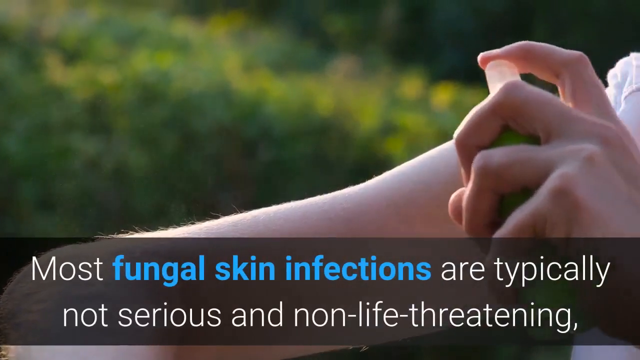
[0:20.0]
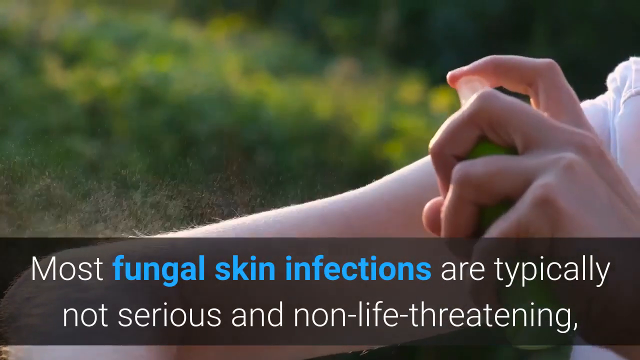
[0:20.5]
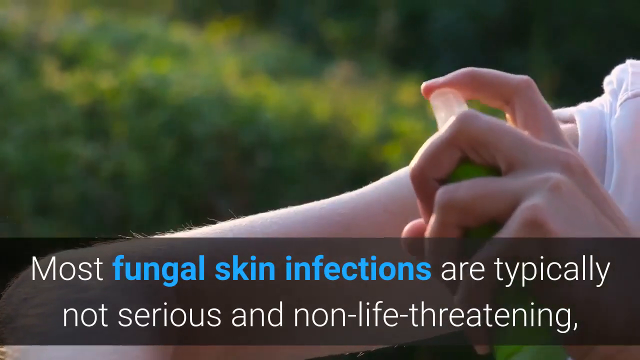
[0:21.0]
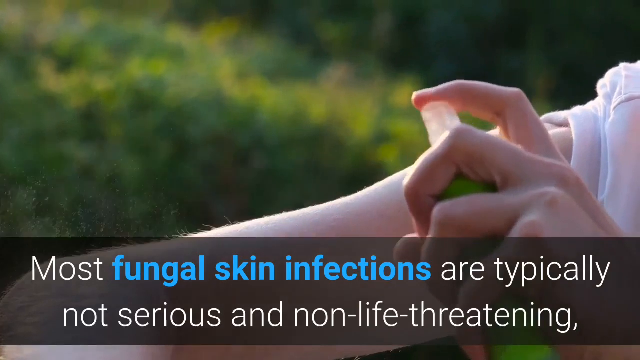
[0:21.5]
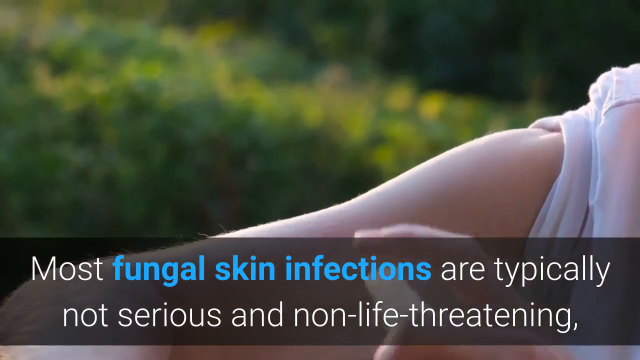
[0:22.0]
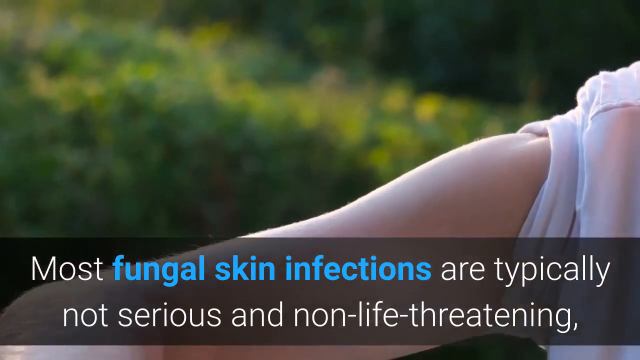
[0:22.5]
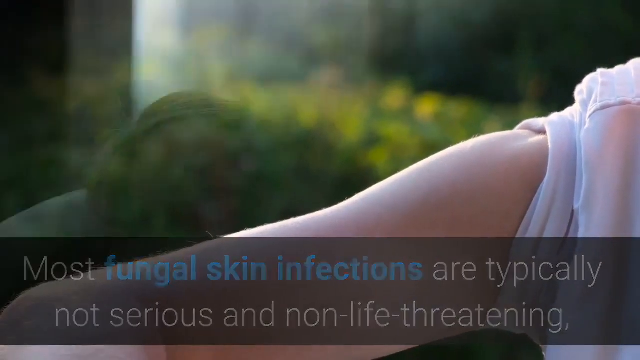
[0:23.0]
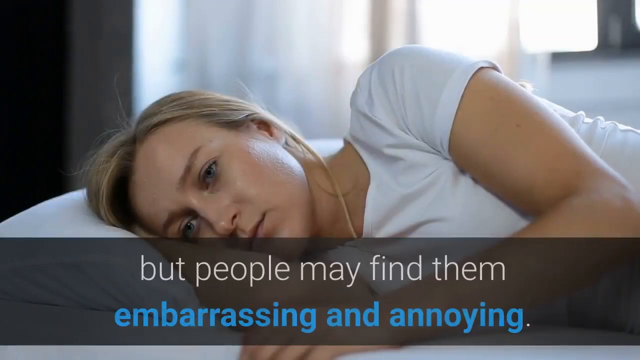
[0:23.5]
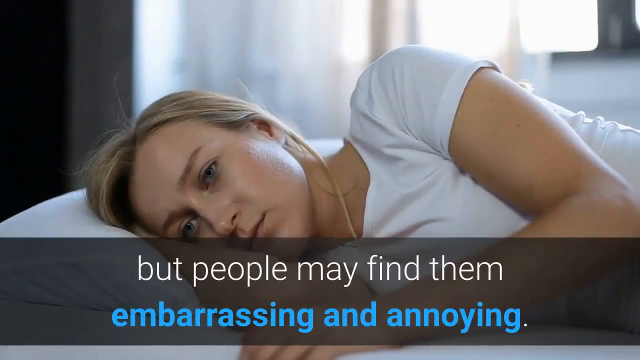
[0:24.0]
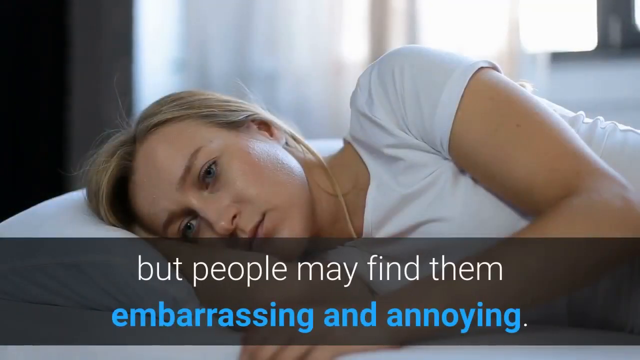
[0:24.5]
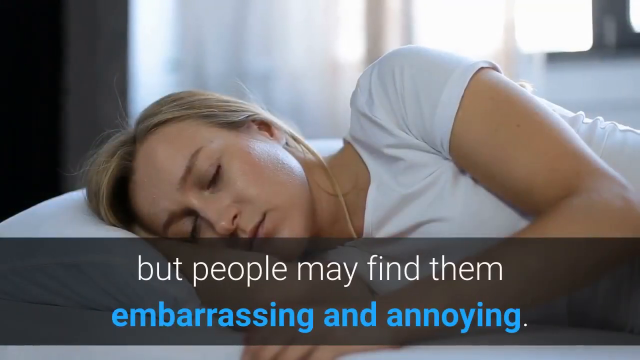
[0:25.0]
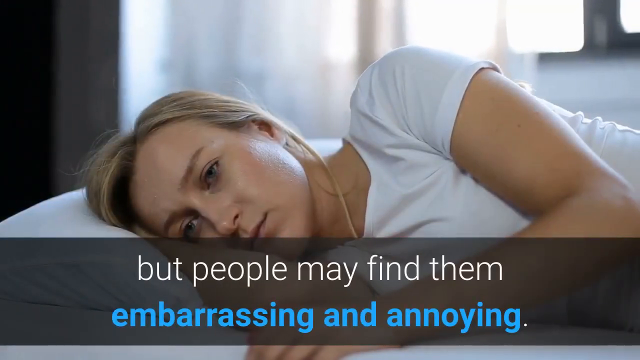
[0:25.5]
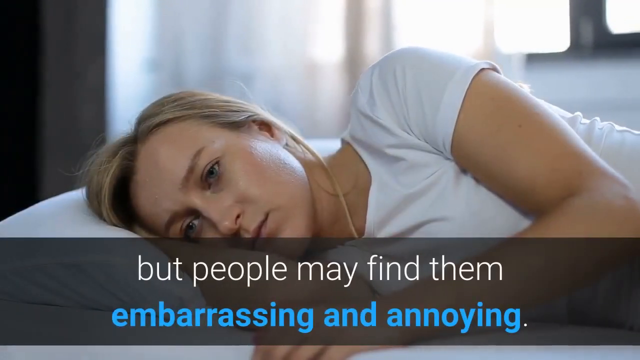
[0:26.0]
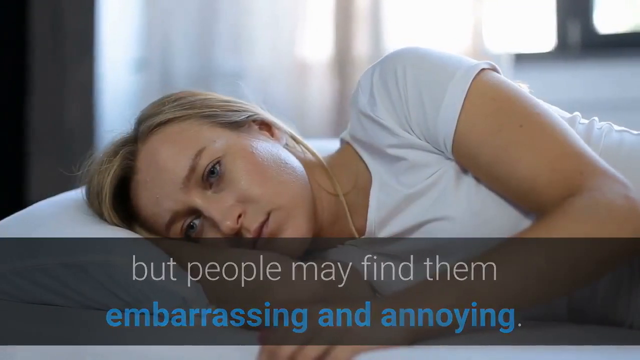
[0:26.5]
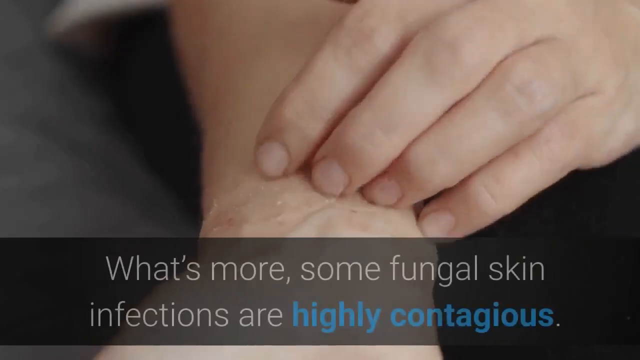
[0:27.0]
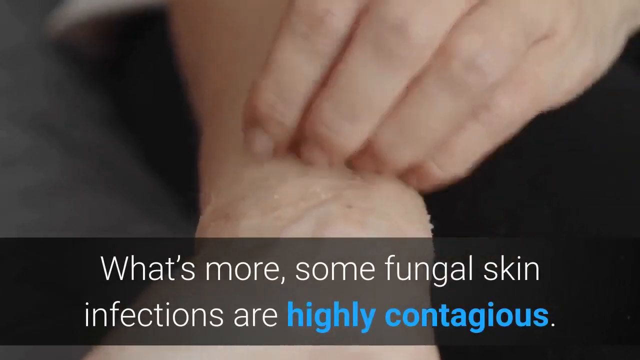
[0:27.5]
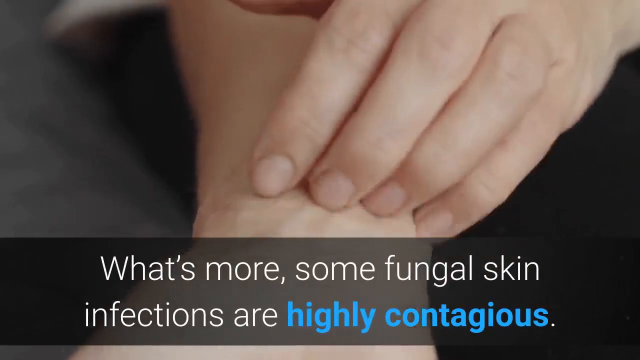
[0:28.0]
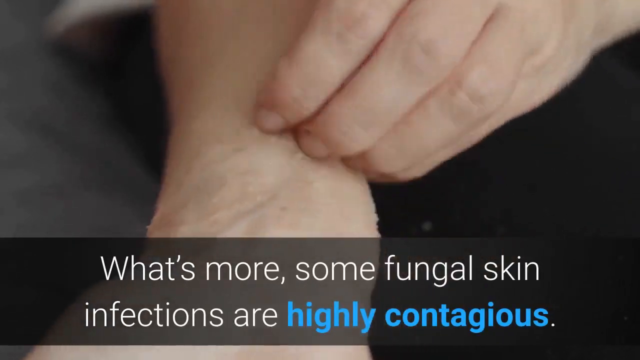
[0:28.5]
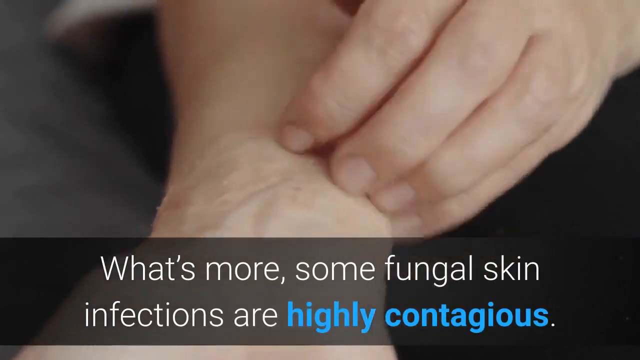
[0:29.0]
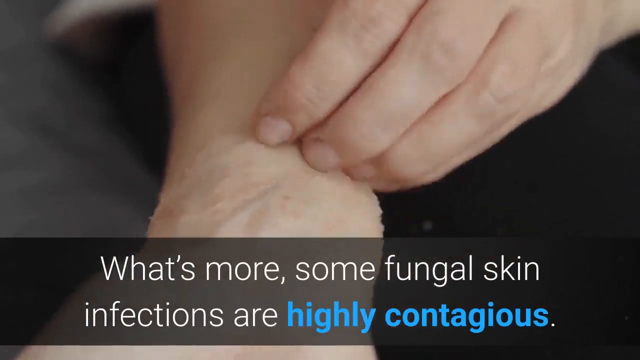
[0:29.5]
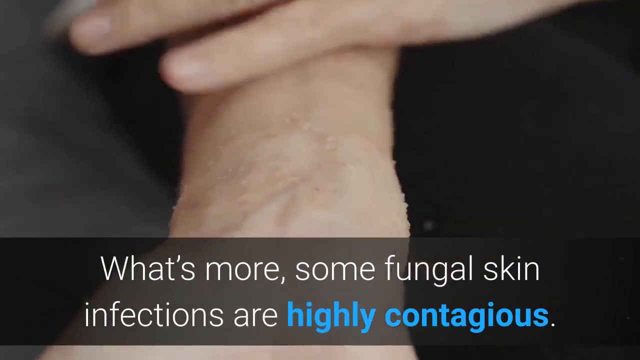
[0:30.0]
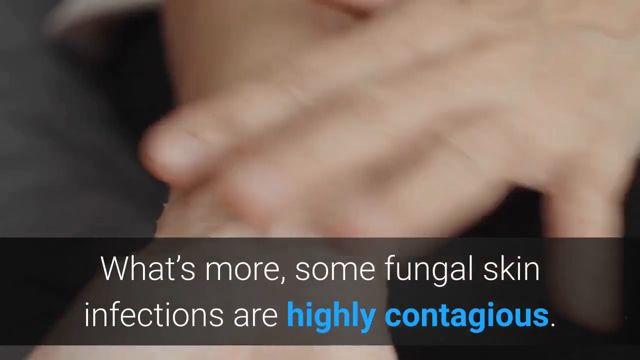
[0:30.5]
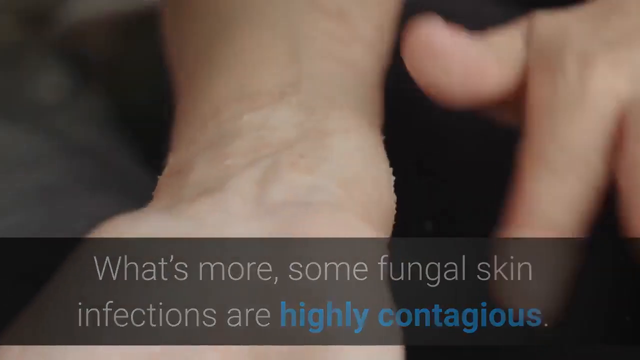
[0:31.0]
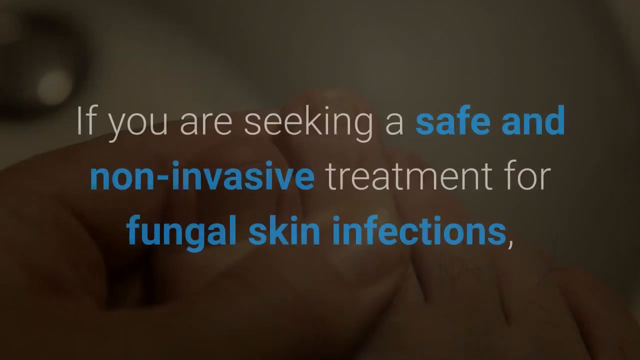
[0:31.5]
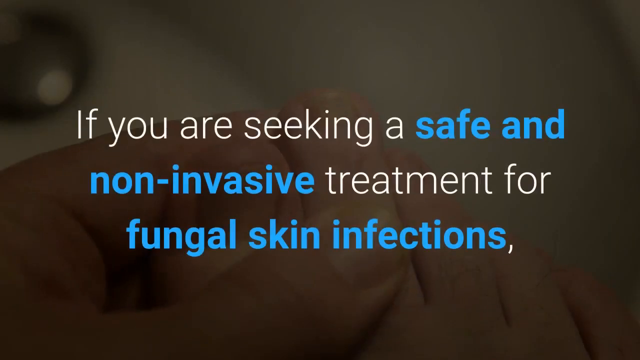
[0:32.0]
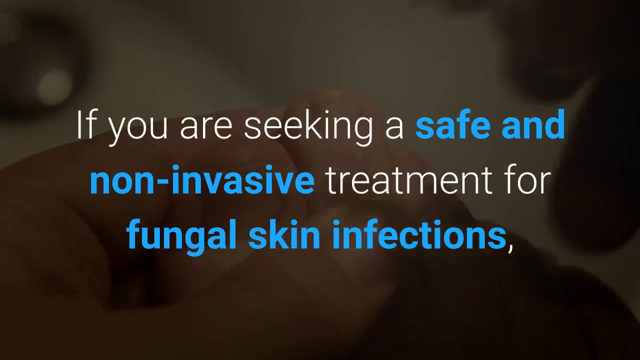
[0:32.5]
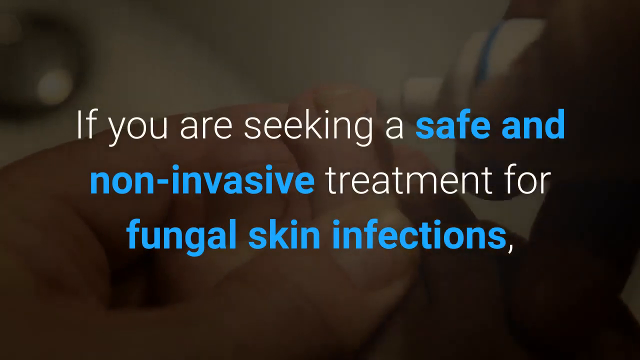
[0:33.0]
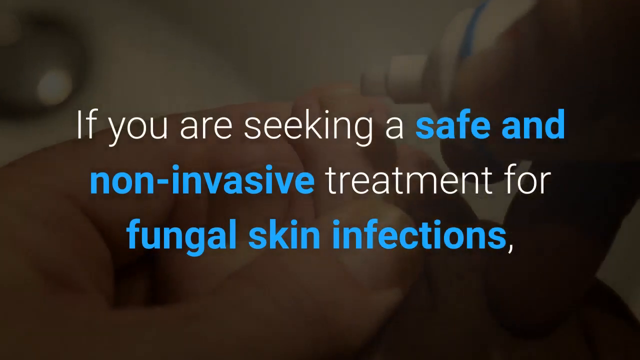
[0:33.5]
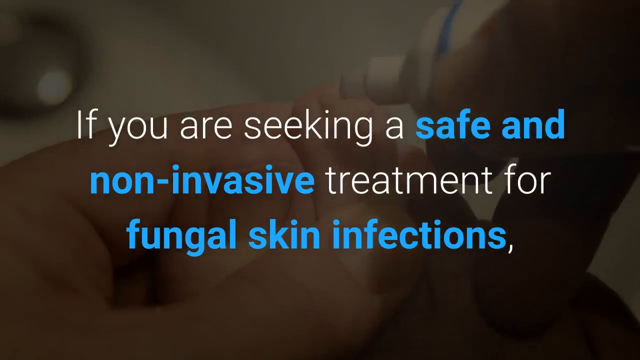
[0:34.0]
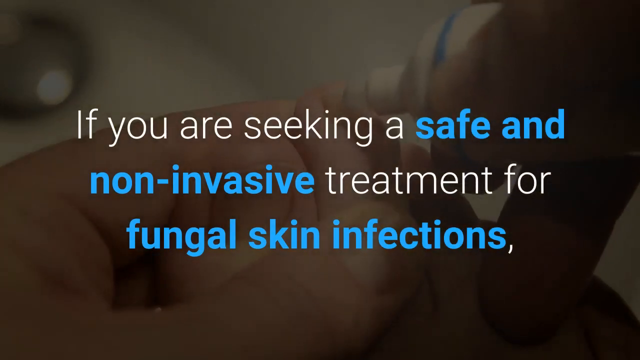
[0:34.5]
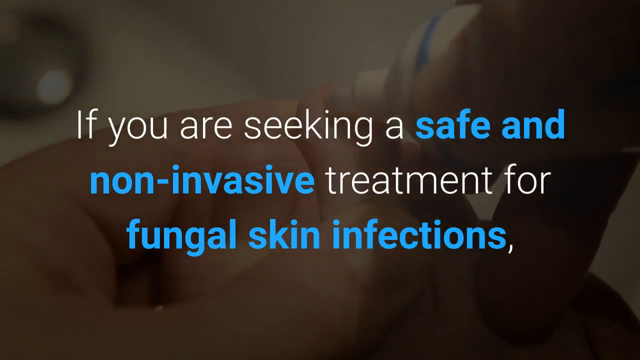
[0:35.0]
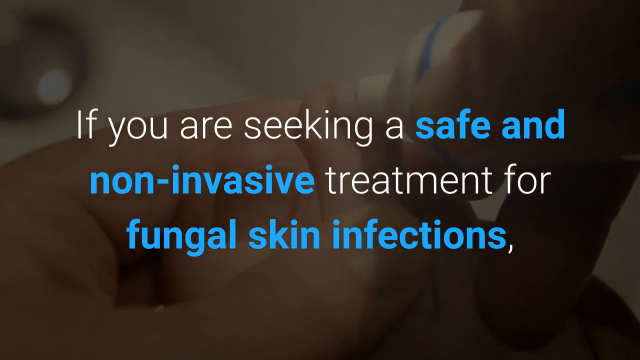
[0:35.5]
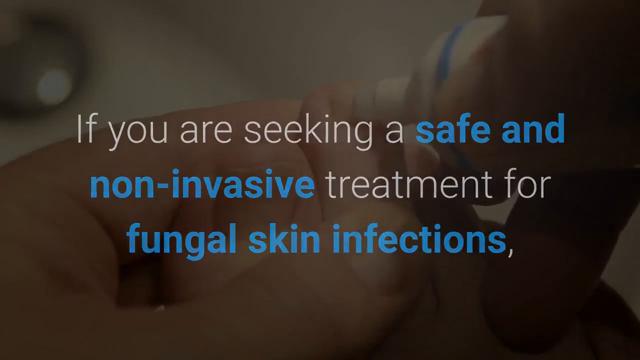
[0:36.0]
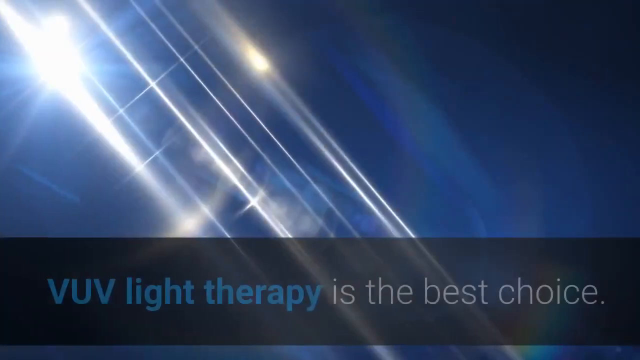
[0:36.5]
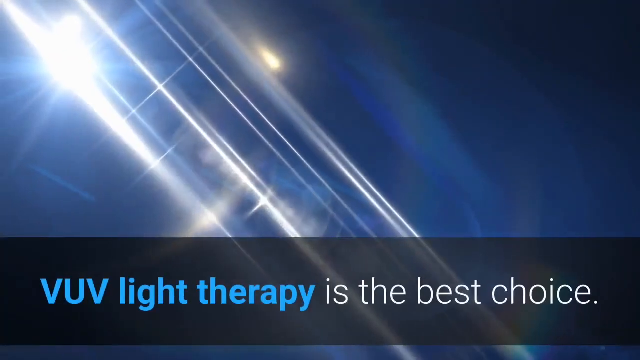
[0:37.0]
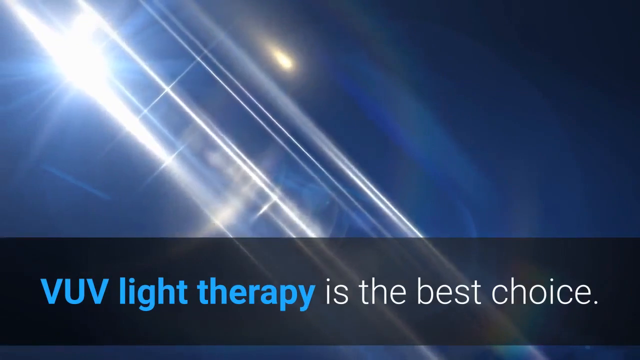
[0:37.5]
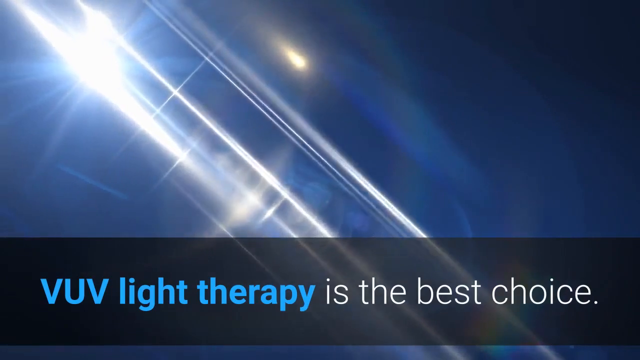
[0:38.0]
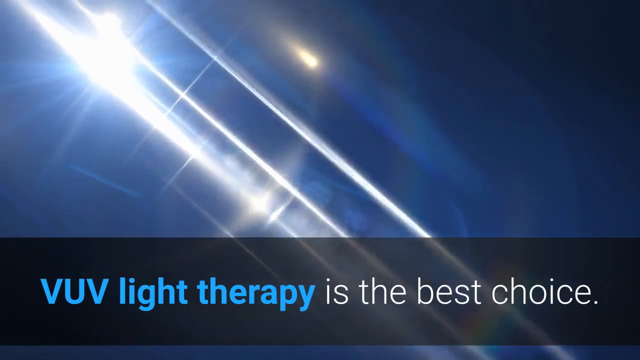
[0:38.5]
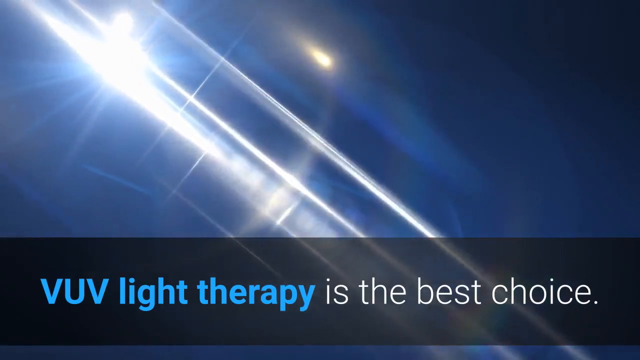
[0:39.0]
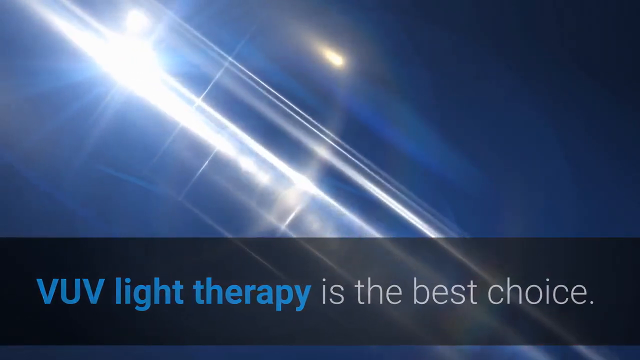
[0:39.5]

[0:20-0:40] Someone sprays from a green bottle onto an arm while the text at the bottom reads "most fungal skin infections are typically not serious and non-life-threatening", all in white except "fungal skin infections" in blue. The background is faded, but a bush and trees can be made out. A blonde woman then lies on a bed with her head on a white pillow. She wears a white shirt, has Caucasian skin and blue eyes, and is pale. Behind her are a window and white curtains, and the background is blurred. A translucent black banner at the bottom reads "but people may find them embarrassing and annoying", with the top line in white and the bottom line, "embarrassing and annoying", in blue. She blinks and looks slightly distressed. Next, a grayish image appears to show someone's legs with an arm on top, the other hand scratching the wrist, and the black banner reads "what's more some fungal skin infections are highly contagious". A blurred shot then shows an ointment tube or bottle in the upper right corner being placed on what looks to be a hand, with the text "if you are seeking a safe and non-invasive treatment for fungal skin infections"; "safe and non-invasive" and "fungal skin infections" are in blue and the rest in white. Finally, a beam of light comes from the upper left corner through a blue screen, with several angled light beams coming from that source, and text at the bottom says "VUV light therapy is the best choice."